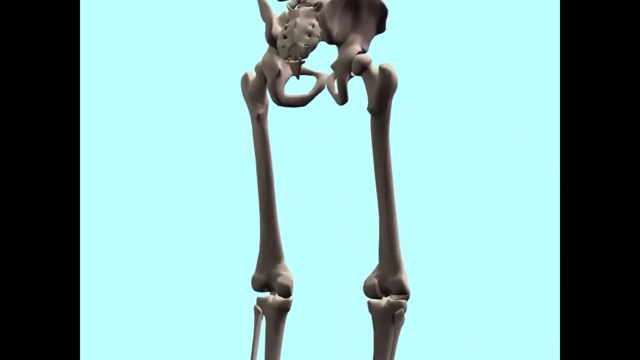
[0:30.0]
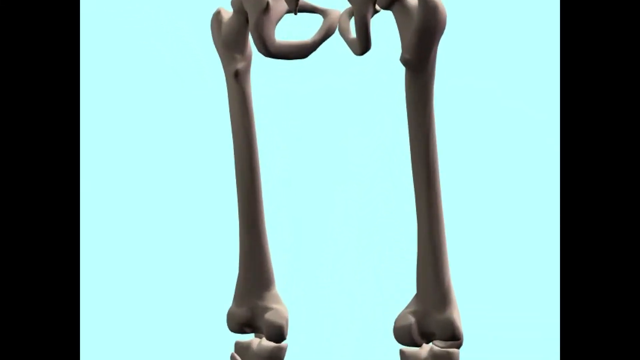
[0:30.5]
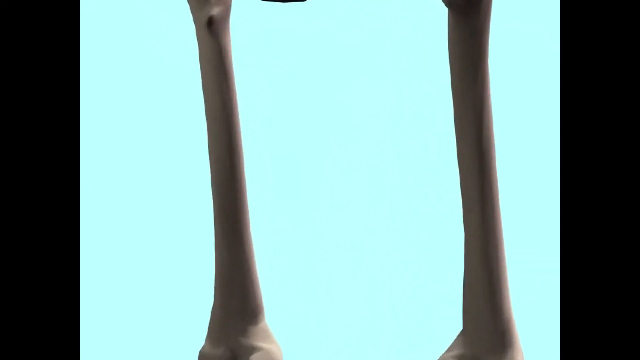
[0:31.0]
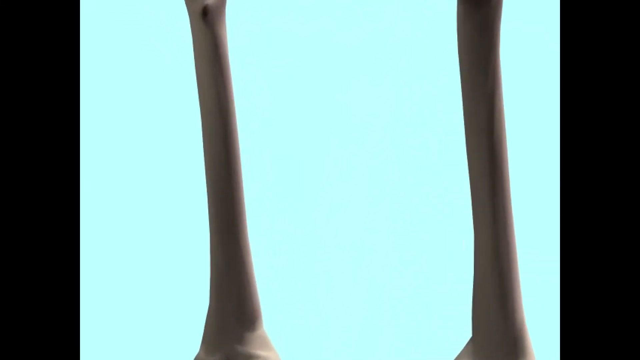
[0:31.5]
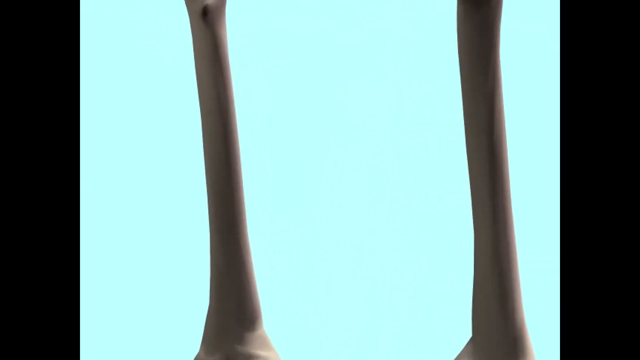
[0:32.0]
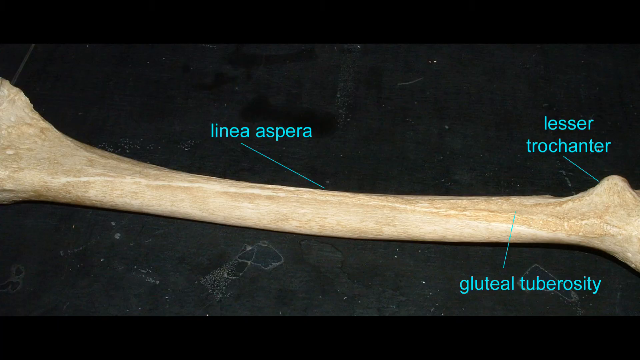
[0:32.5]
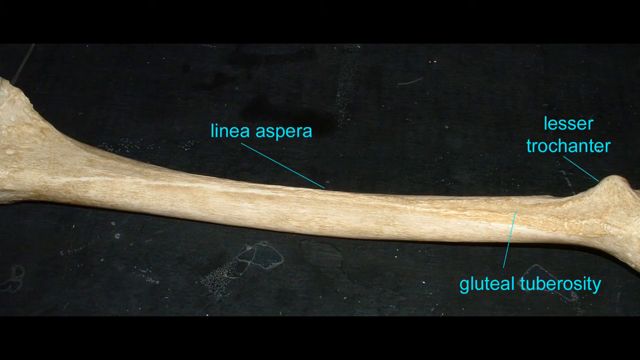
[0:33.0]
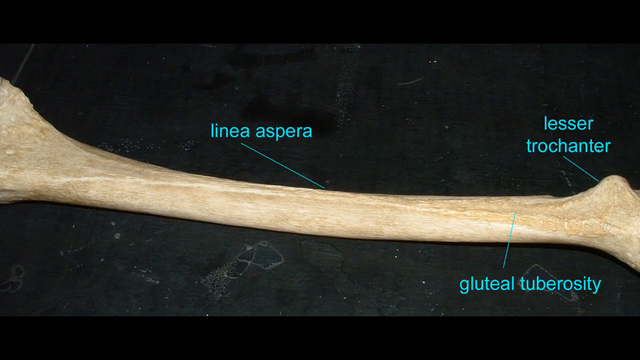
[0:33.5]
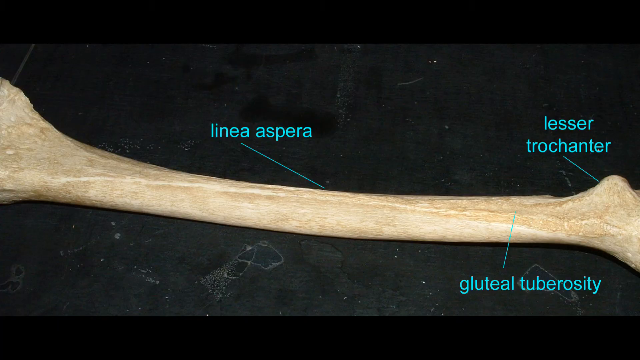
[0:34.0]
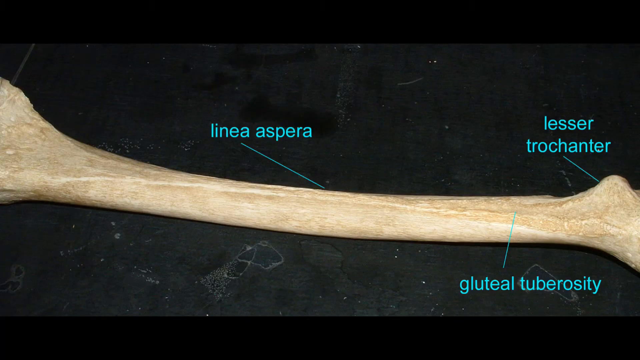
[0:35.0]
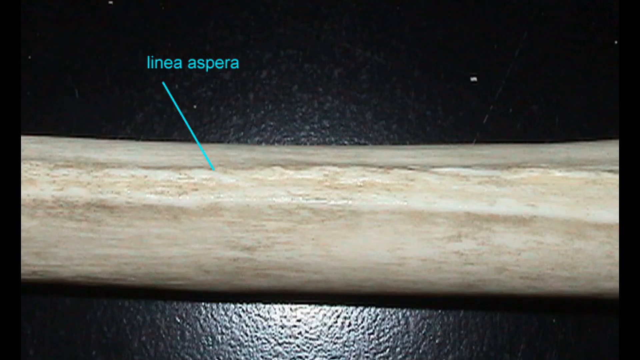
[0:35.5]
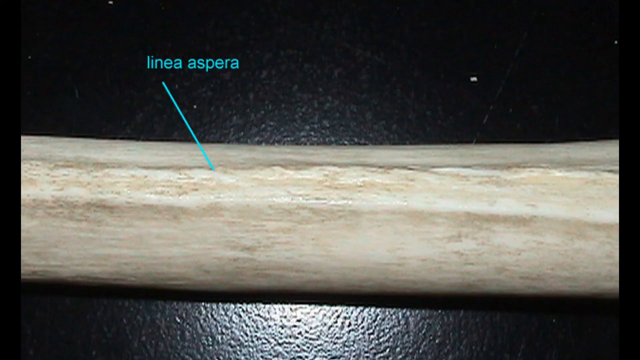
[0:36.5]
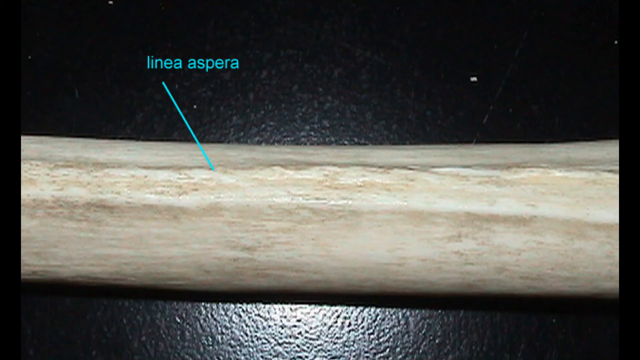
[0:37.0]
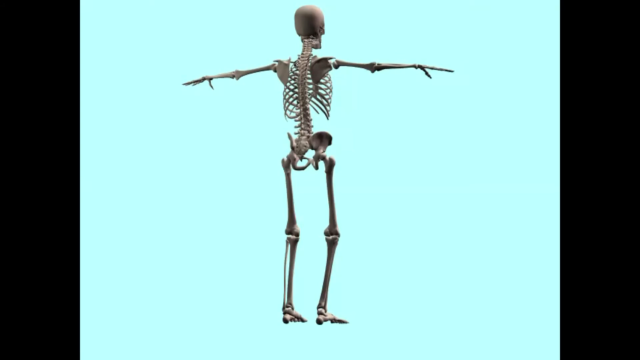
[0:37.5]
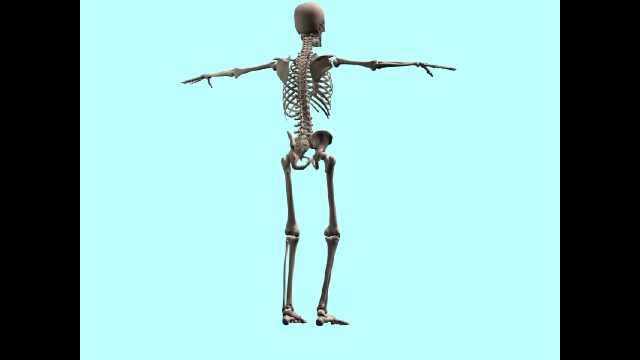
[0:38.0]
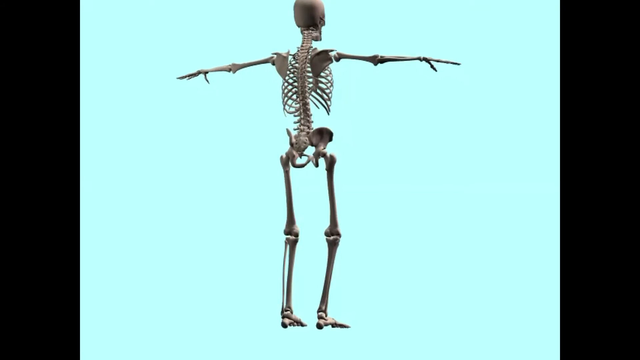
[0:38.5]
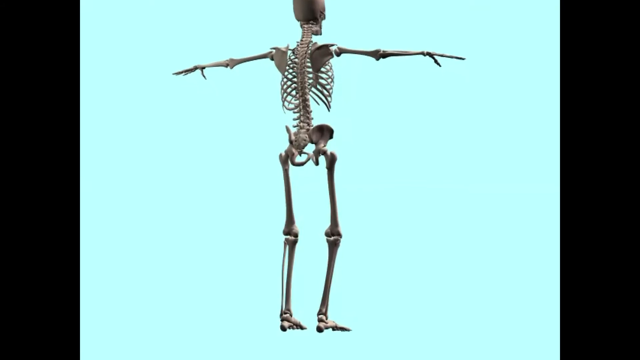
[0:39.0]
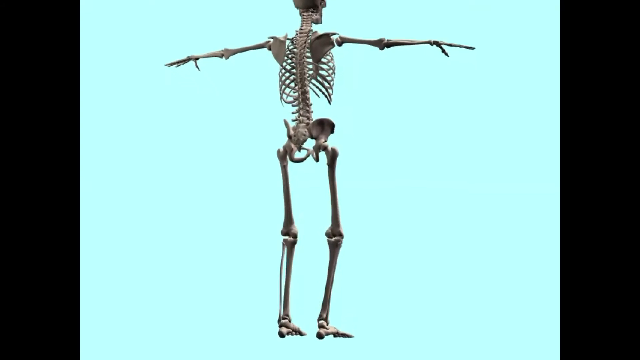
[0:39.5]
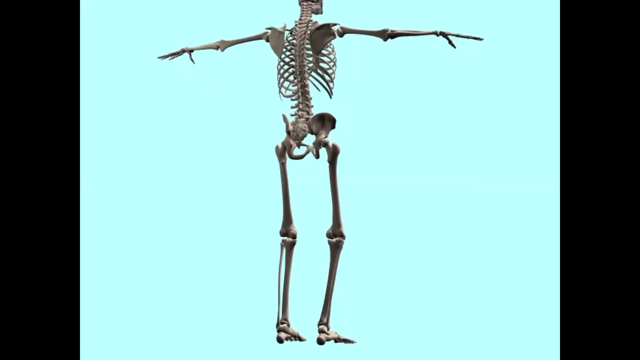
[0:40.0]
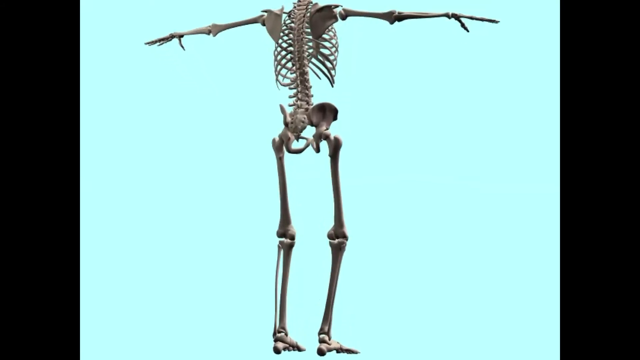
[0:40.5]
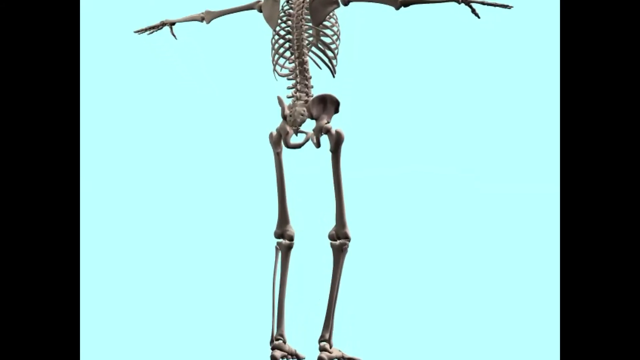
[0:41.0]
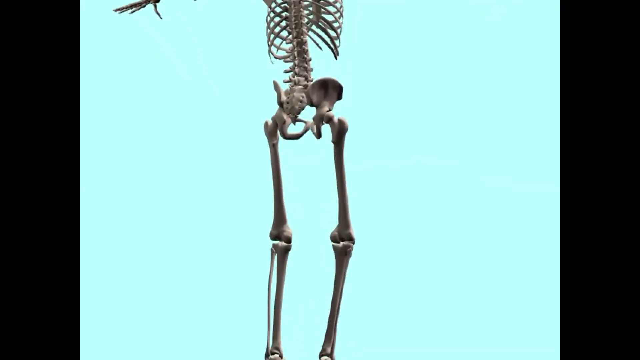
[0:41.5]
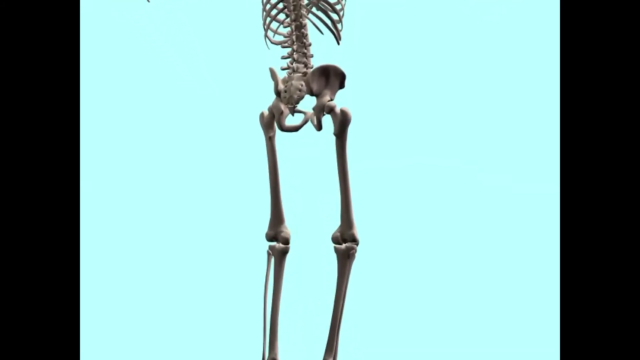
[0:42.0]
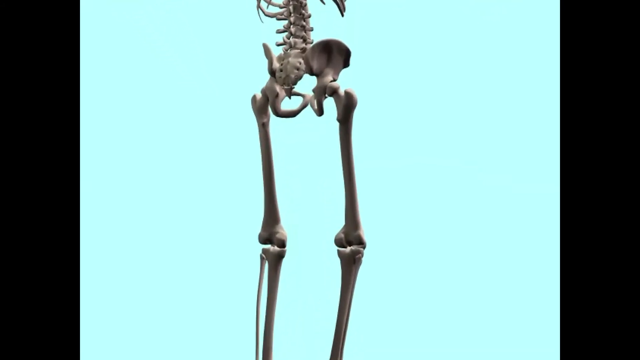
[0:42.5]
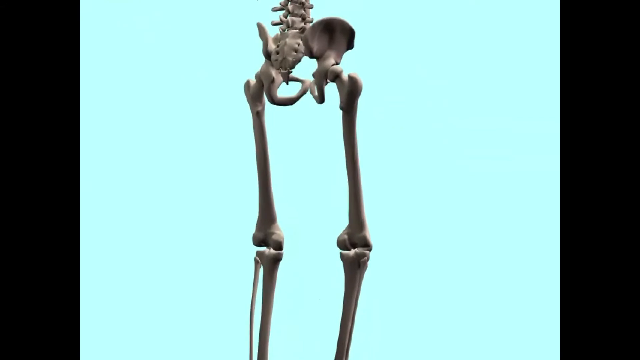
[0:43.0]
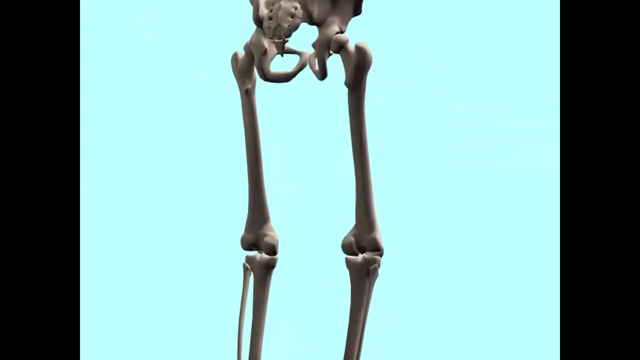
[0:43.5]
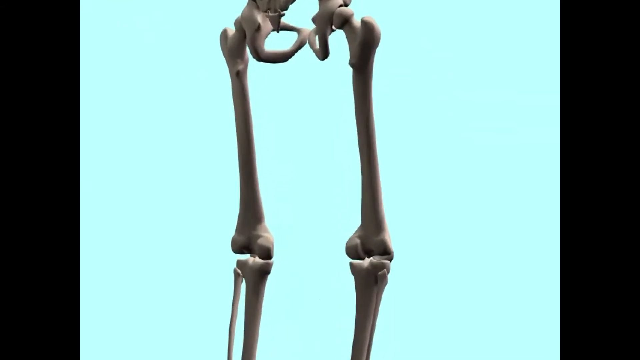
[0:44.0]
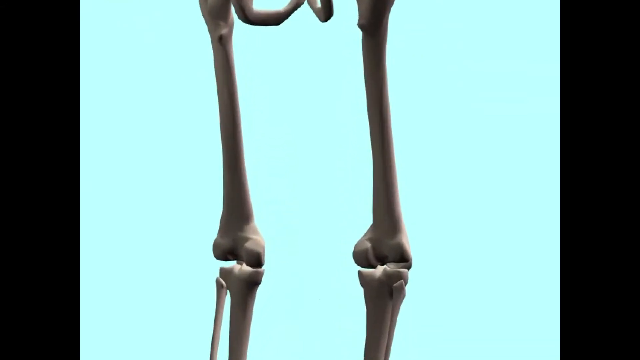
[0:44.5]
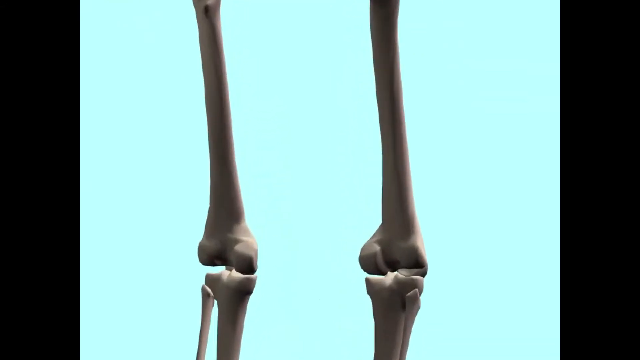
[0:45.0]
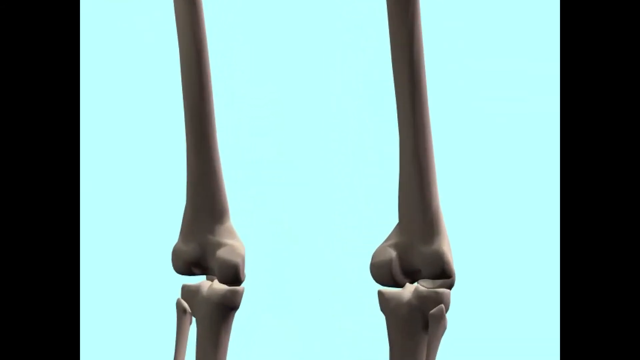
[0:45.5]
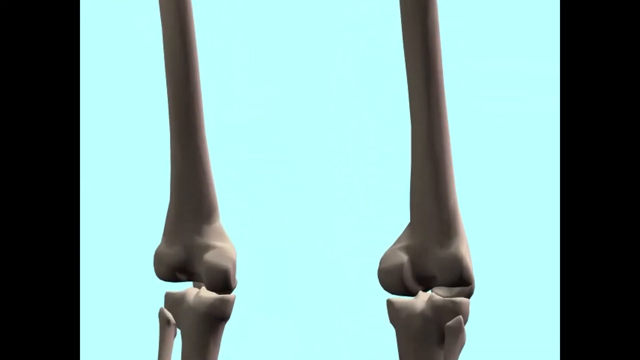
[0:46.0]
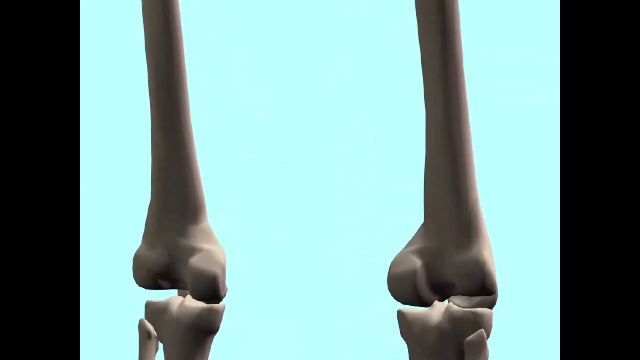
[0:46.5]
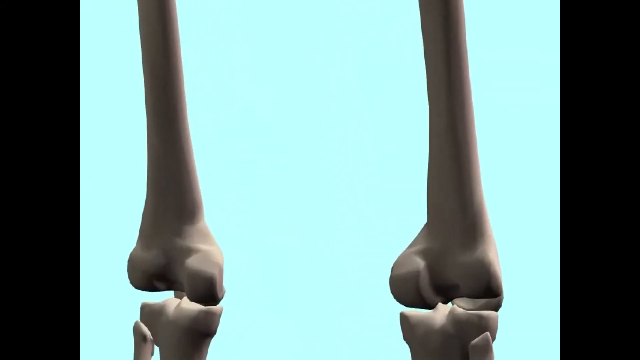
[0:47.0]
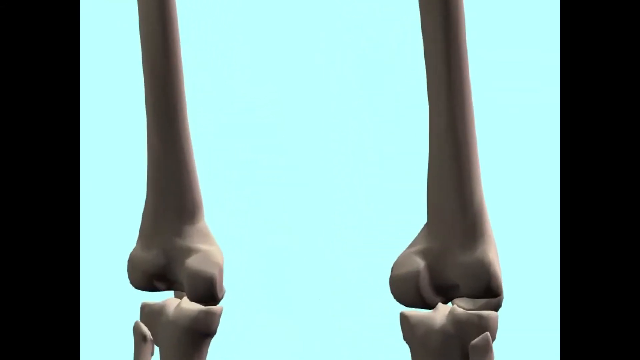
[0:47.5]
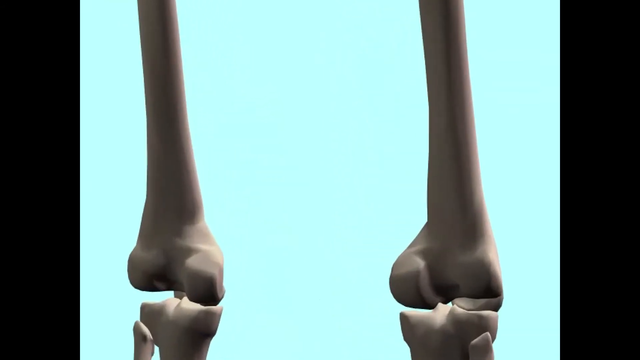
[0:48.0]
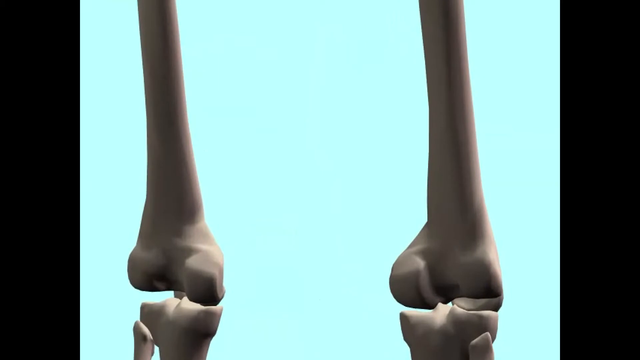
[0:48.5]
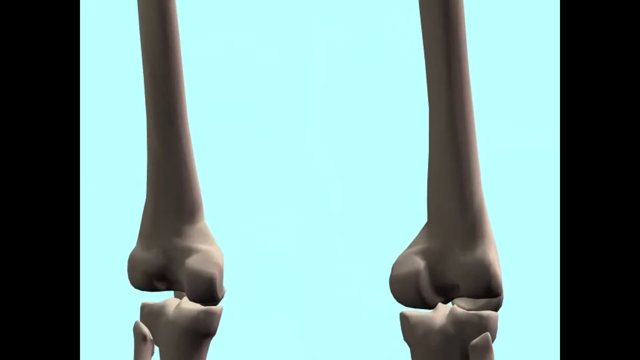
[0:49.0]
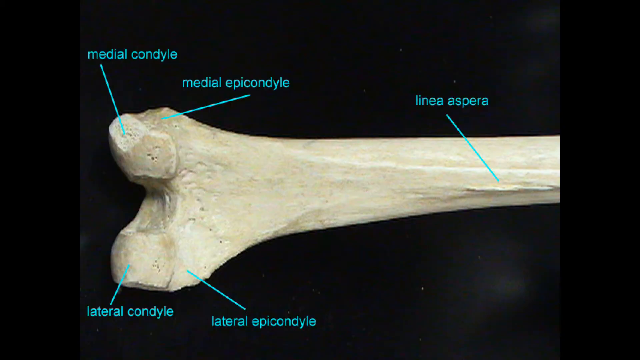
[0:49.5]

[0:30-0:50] An image of the skeleton shows the upper leg section, and the camera zooms in to that section. Then an image shows one of the bones laying horizontally on a black desk, with three labels: the one on the left-hand side says "linear aspera", the one on the top right says "lesser trochanter", and the one on the bottom right says "gluteal tuberosity". A zoomed-in view of the "linear aspera" label follows. The image then pans out to the full view of the skeleton, stood tall with its arms stretched out from left to right, seen from the back. The view zooms in to the pelvic area and past it to the knees.